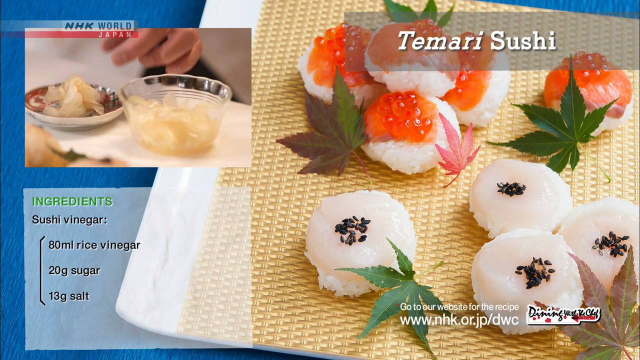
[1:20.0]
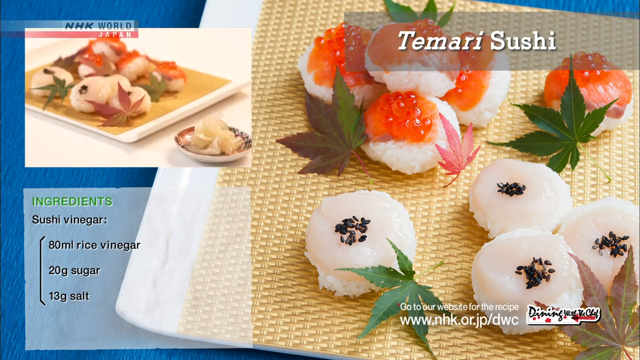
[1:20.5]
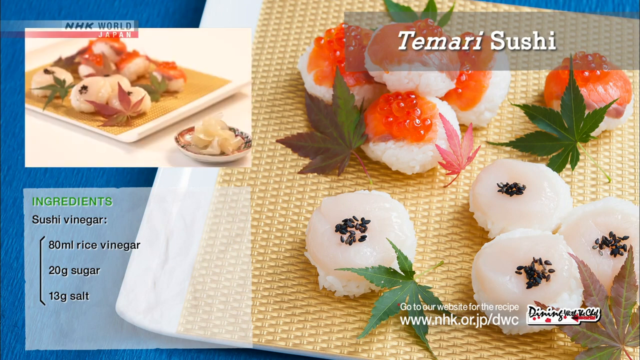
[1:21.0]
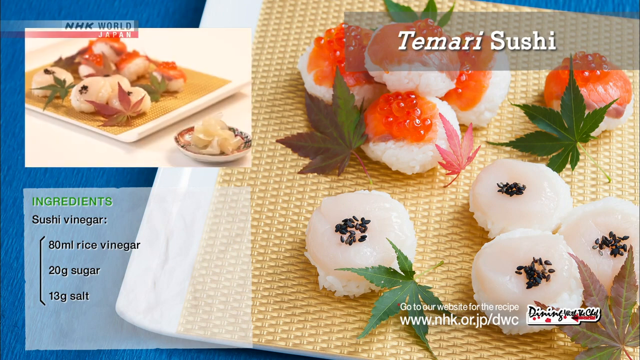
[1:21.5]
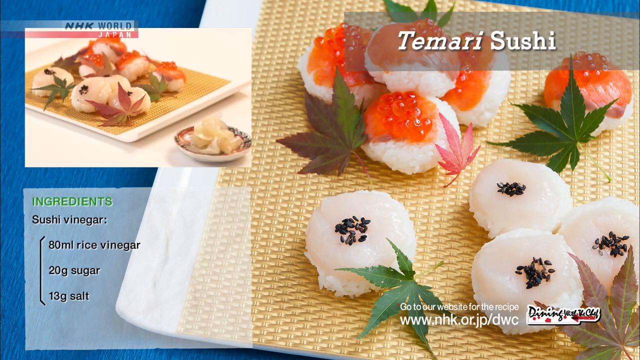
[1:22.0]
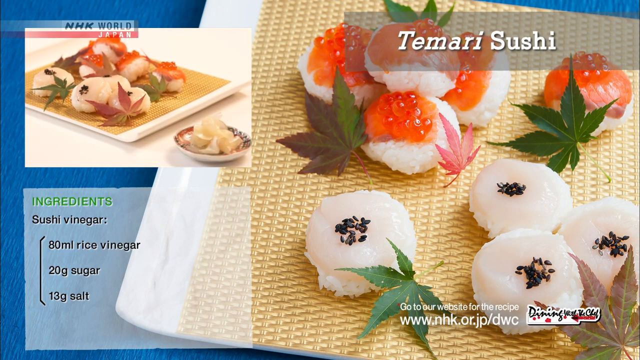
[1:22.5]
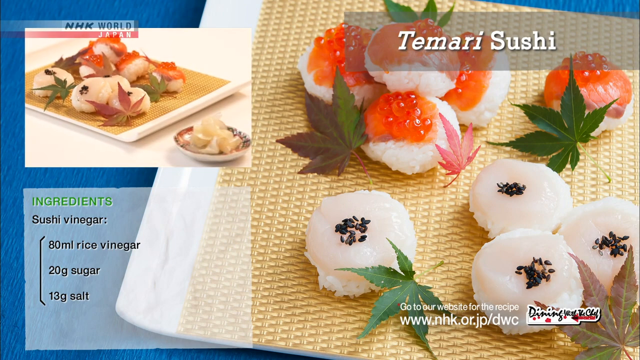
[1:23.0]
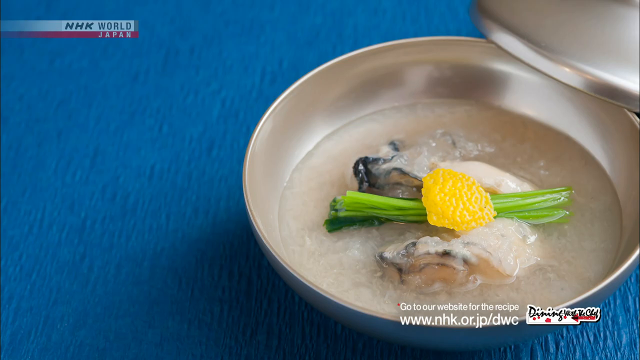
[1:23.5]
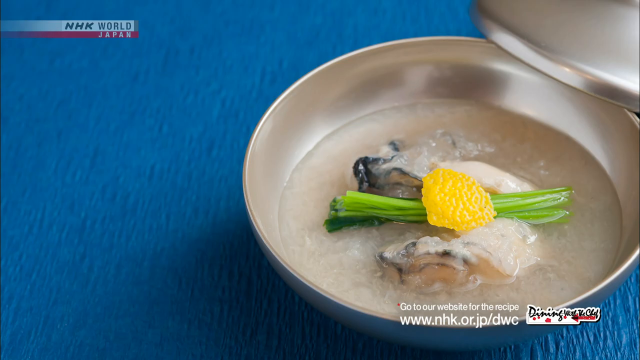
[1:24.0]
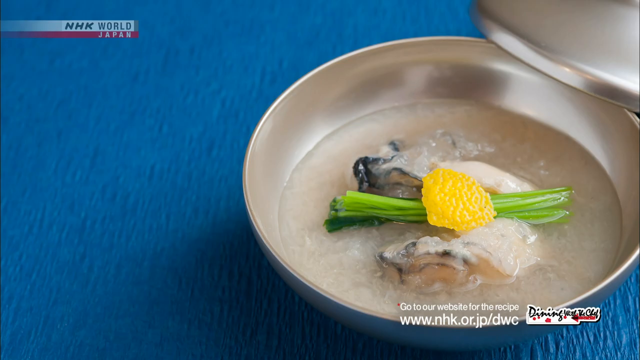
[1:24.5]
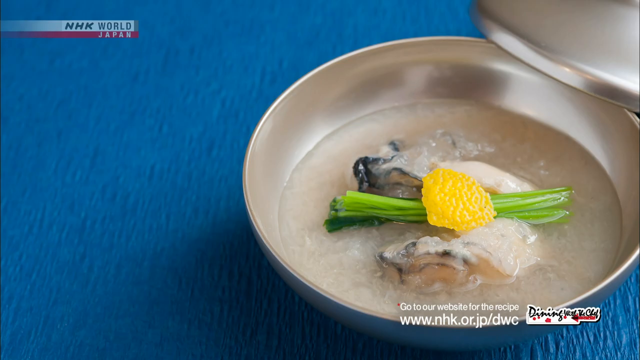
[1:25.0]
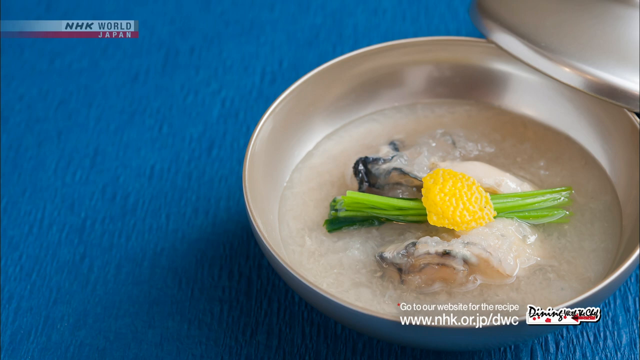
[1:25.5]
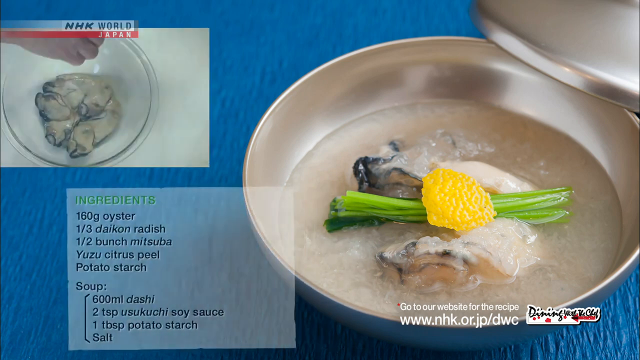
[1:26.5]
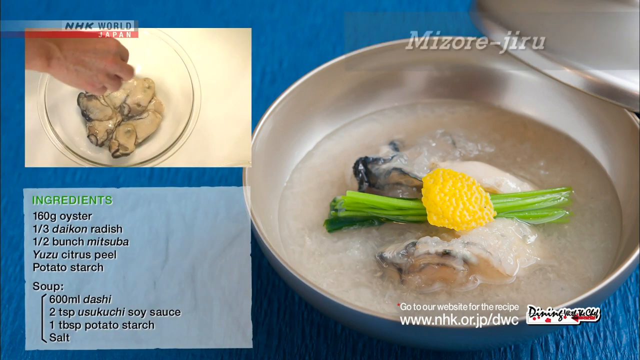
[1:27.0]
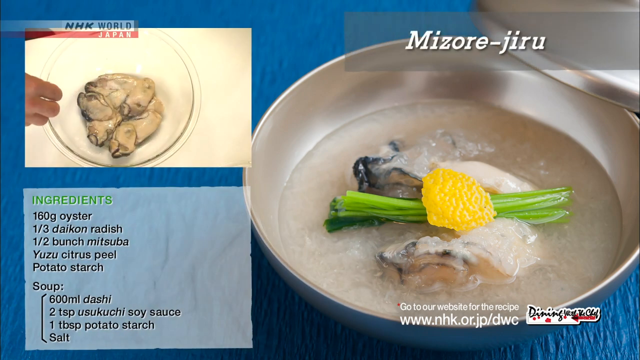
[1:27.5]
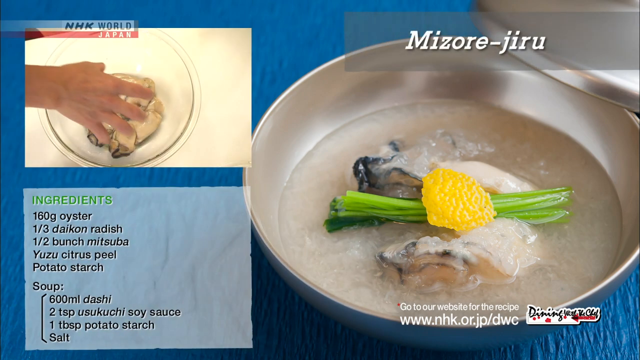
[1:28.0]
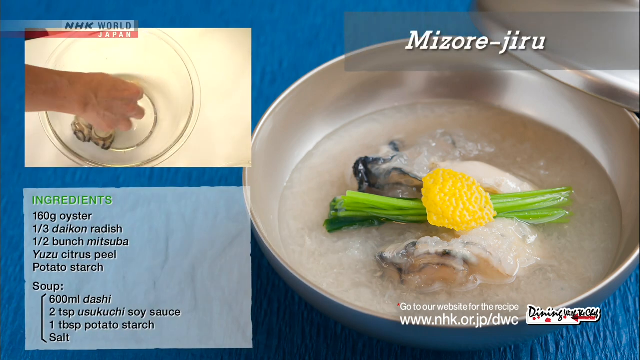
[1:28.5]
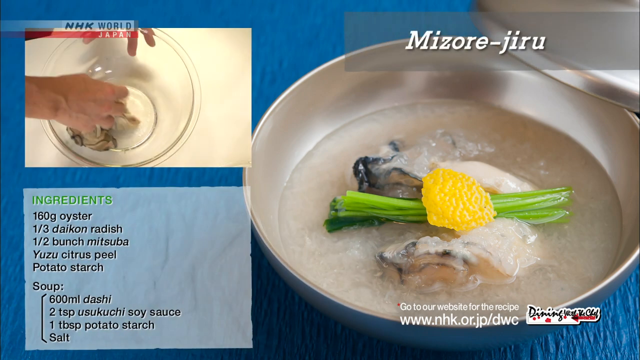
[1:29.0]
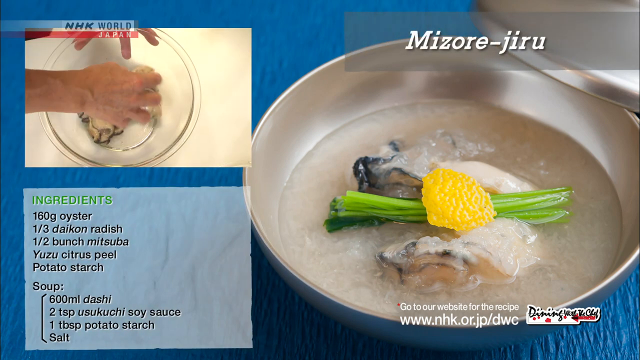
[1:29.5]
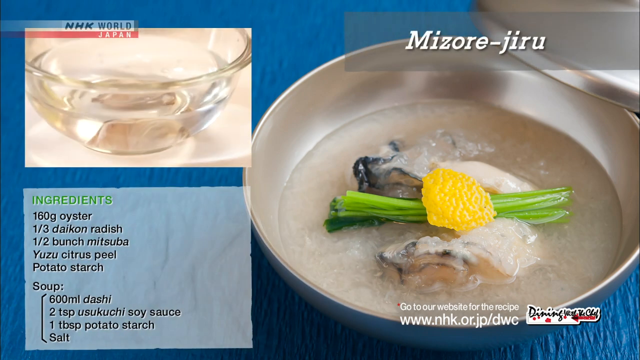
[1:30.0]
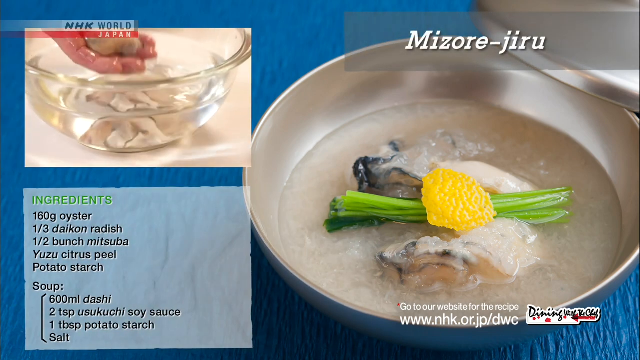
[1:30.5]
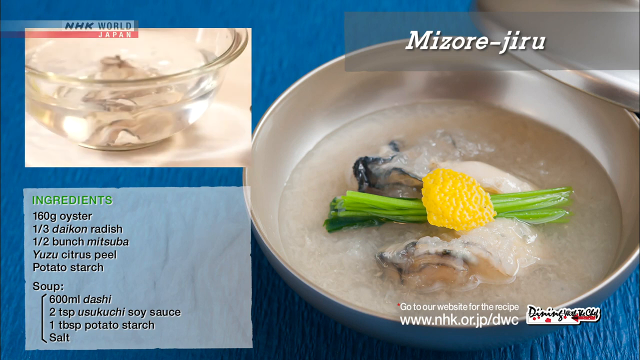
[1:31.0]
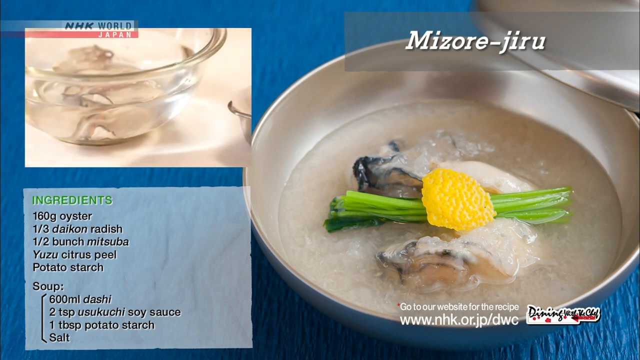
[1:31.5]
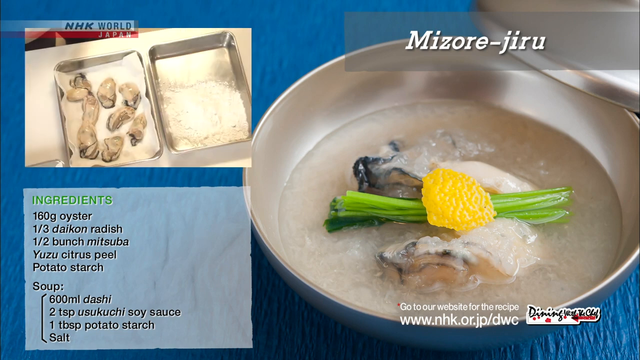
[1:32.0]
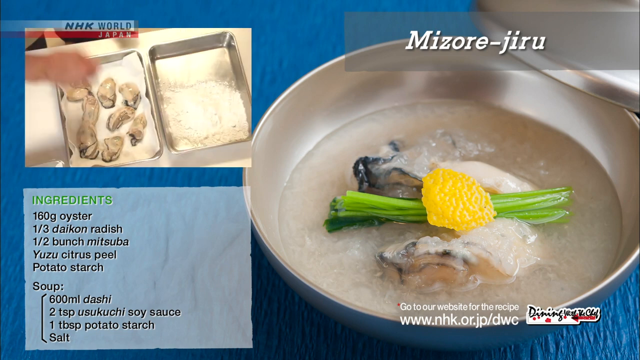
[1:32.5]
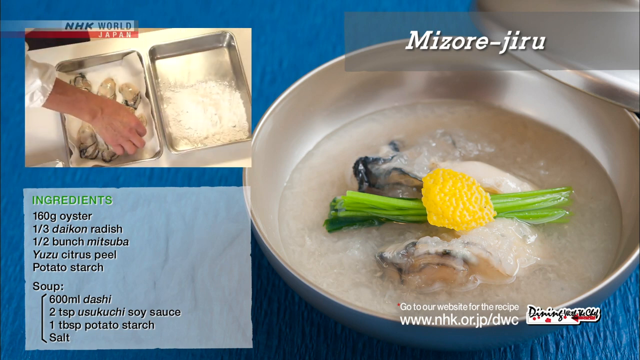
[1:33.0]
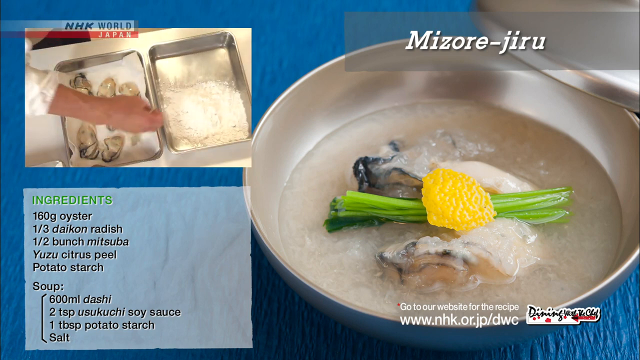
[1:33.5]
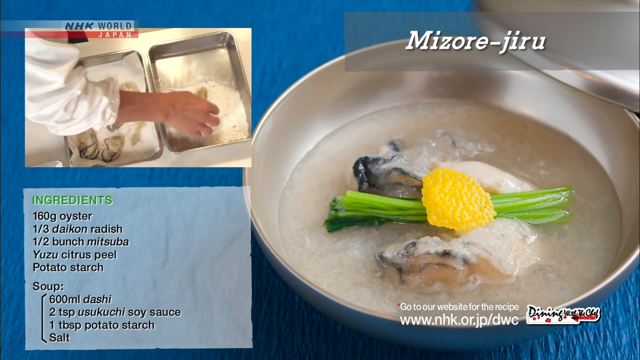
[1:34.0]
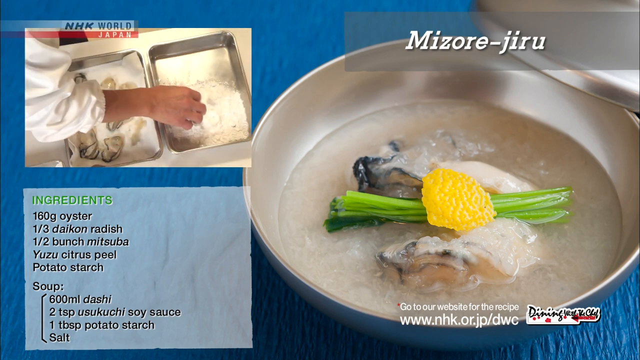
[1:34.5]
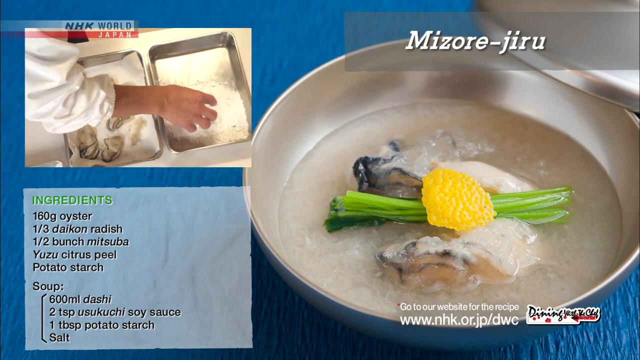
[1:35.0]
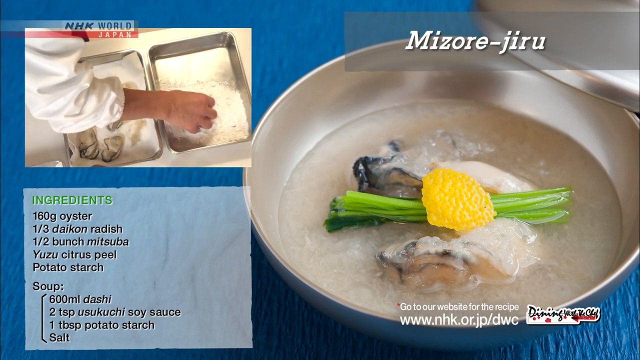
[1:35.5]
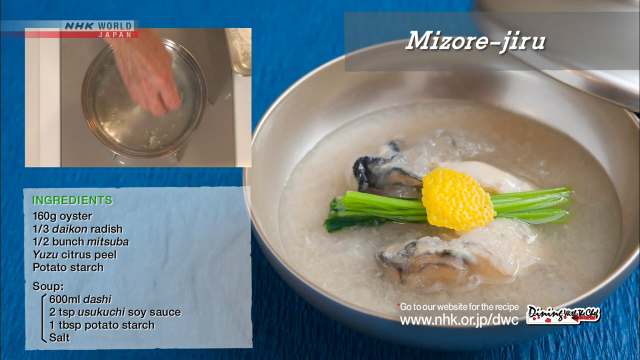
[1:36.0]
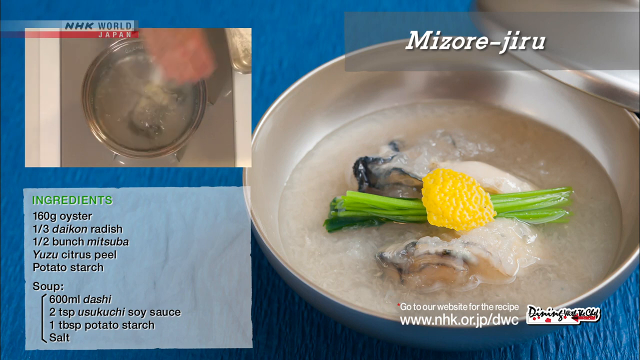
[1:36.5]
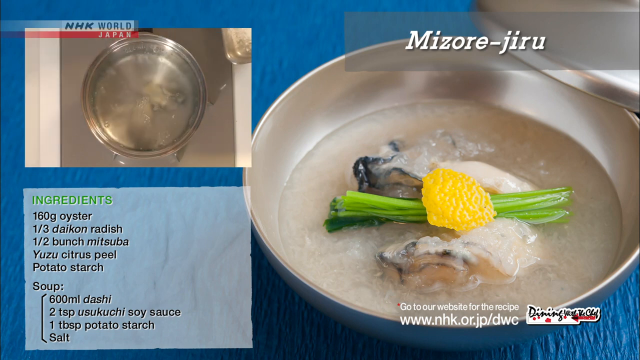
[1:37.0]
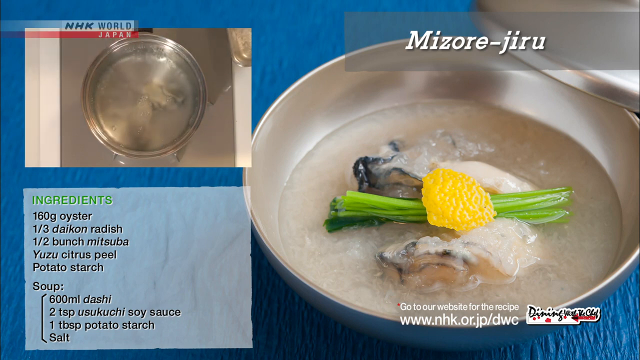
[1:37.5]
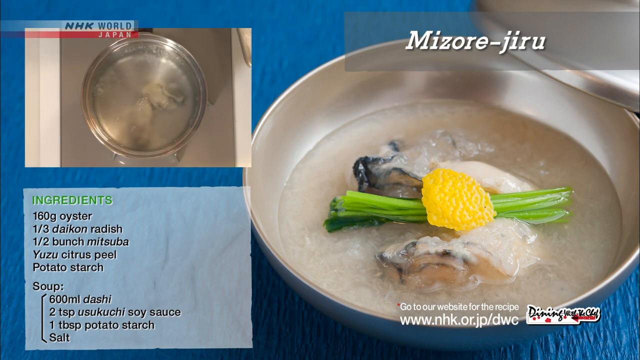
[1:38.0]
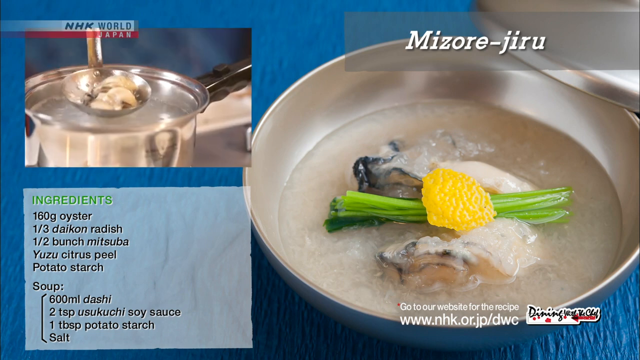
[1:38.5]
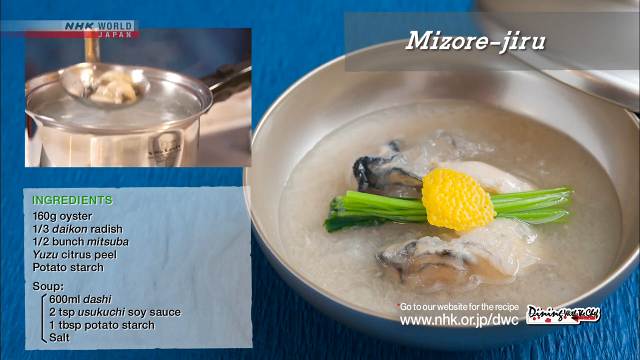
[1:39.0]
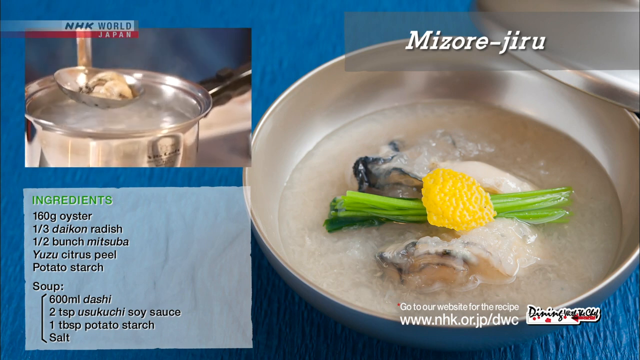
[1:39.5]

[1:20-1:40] The tamari sushi is still on the screen. At the top of the image are white balls of rice with smoked salmon and salmon roe on top; at the bottom are white balls of rice with slices of scallop and black sesame seeds on top. Decorative leaves are between the pieces of sushi. In the bottom right-hand corner of the screen is an ingredient list for vinegar sushi: 80 milliliters of rice vinegar, 20 grams of sugar, and 13 grams of salt, apparently the ingredients that go into the rice for the balls under the fish. In the top left-hand corner, the finished sushi is shown, and a small dish of ginger is placed next to it: the chef carefully takes some of the pickled ginger out of a glass bowl and places it into a small, personal-sized dish. At some point the colorful leaves are placed on the plate with the sushi. The video then begins to show how to make miso-jiro, which seems to be some sort of rice porridge, possibly with oysters in it.